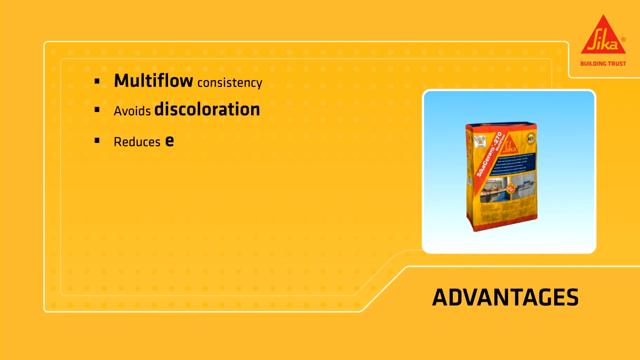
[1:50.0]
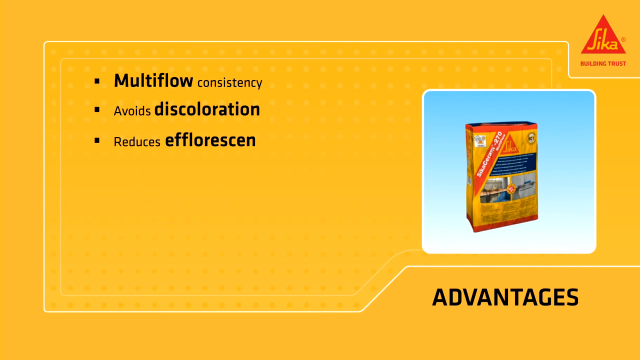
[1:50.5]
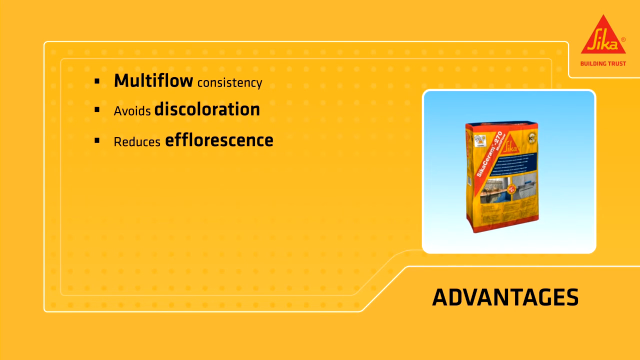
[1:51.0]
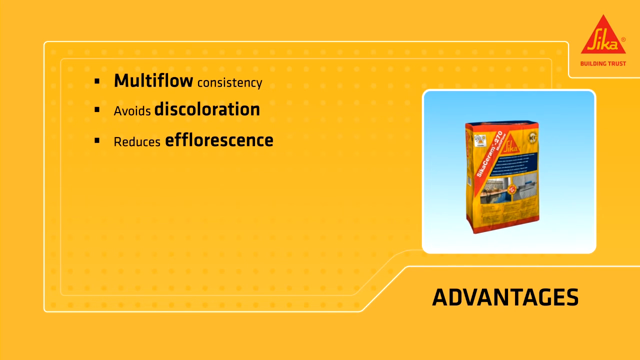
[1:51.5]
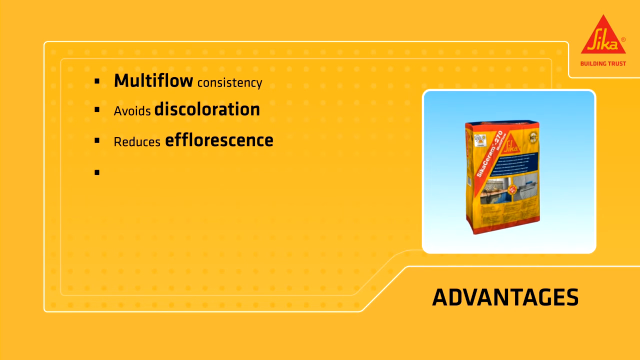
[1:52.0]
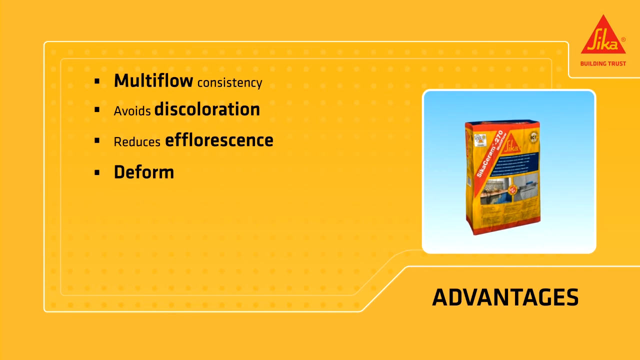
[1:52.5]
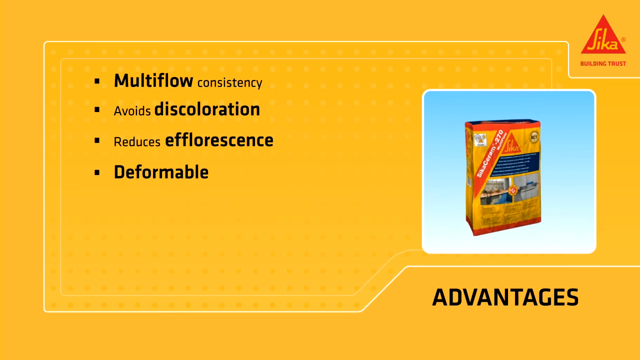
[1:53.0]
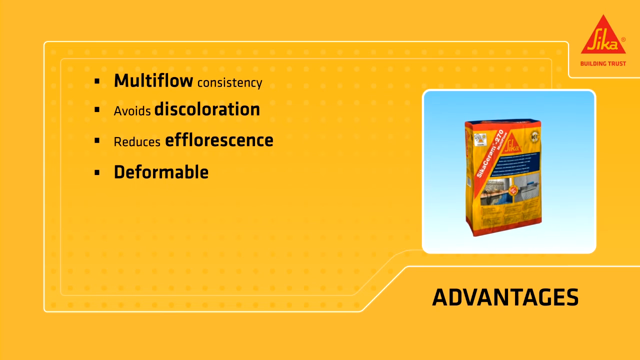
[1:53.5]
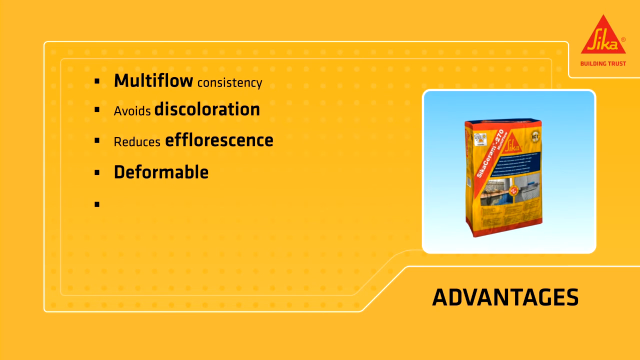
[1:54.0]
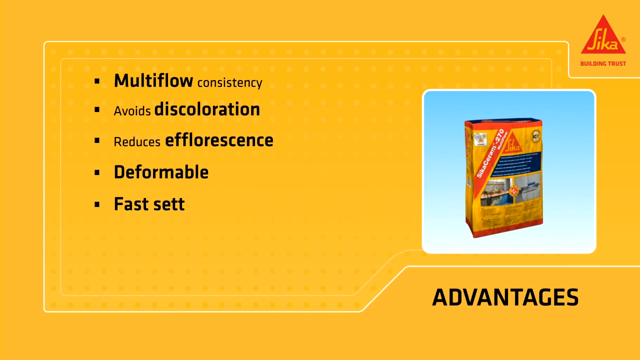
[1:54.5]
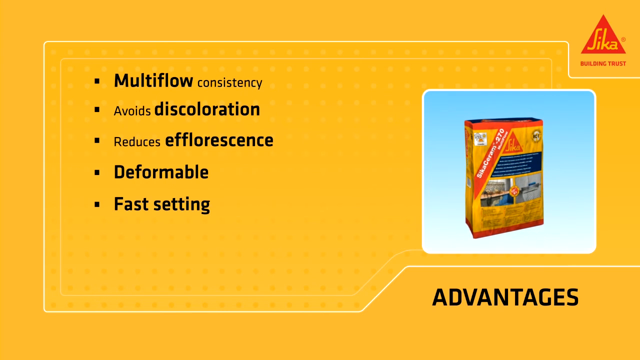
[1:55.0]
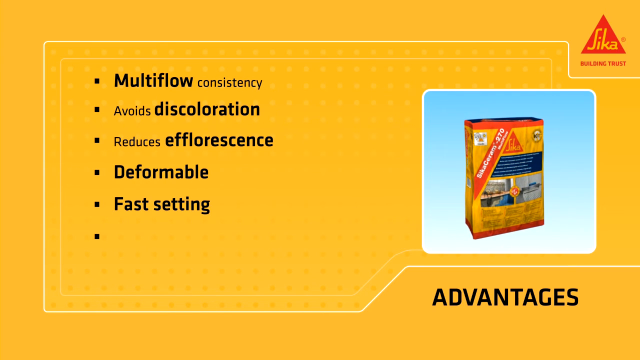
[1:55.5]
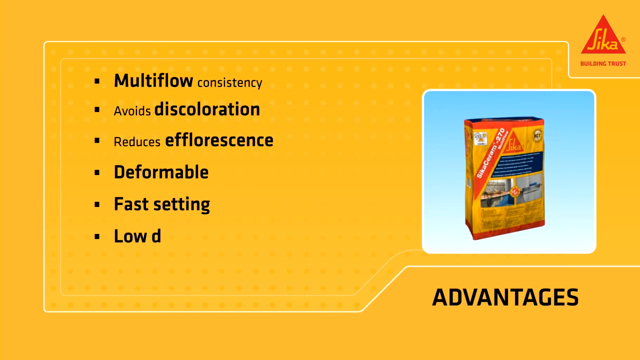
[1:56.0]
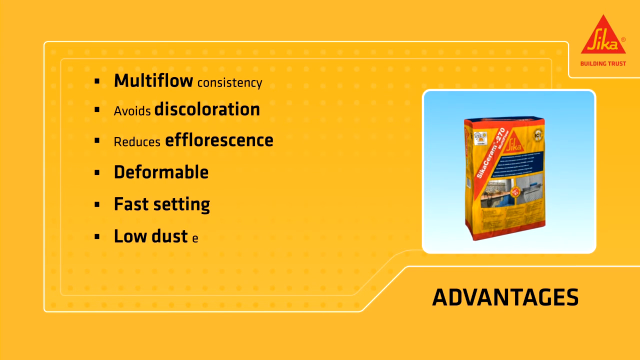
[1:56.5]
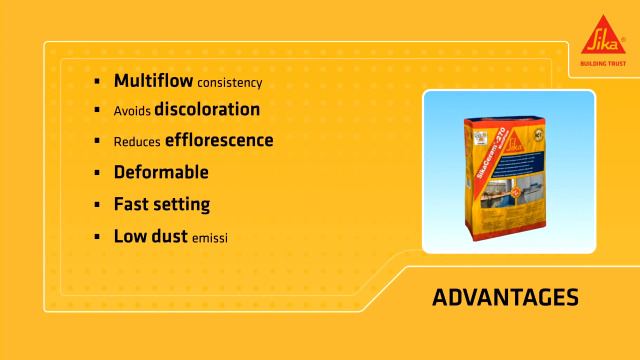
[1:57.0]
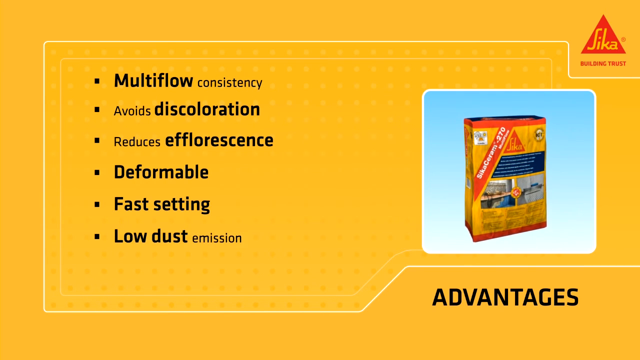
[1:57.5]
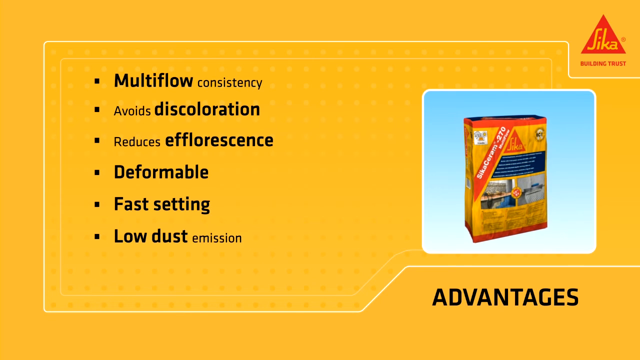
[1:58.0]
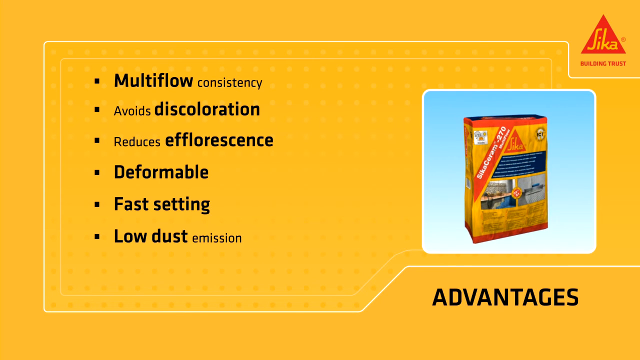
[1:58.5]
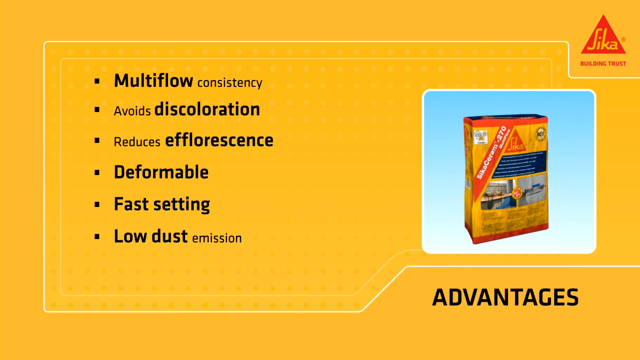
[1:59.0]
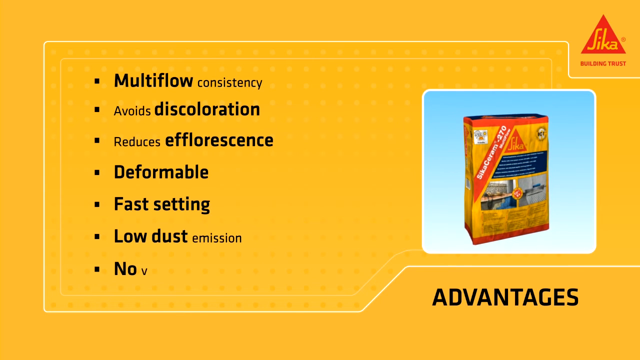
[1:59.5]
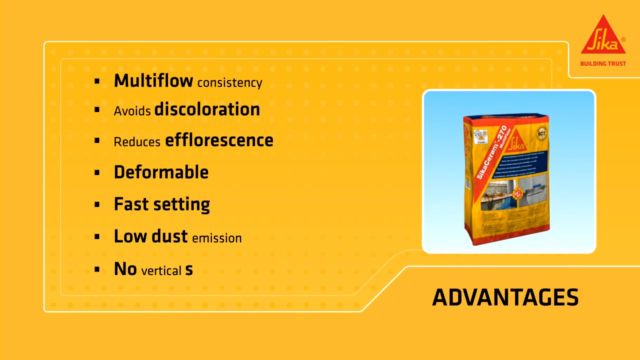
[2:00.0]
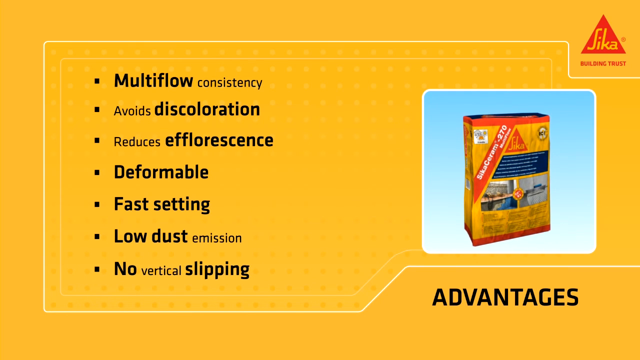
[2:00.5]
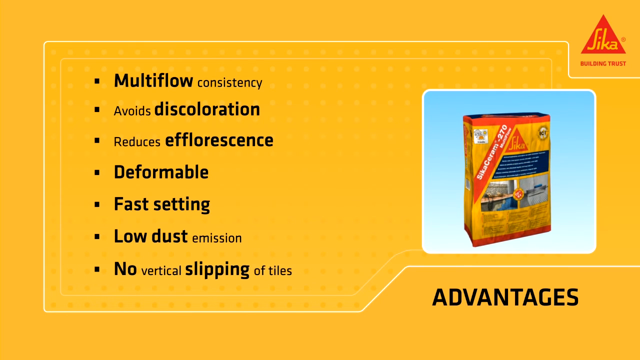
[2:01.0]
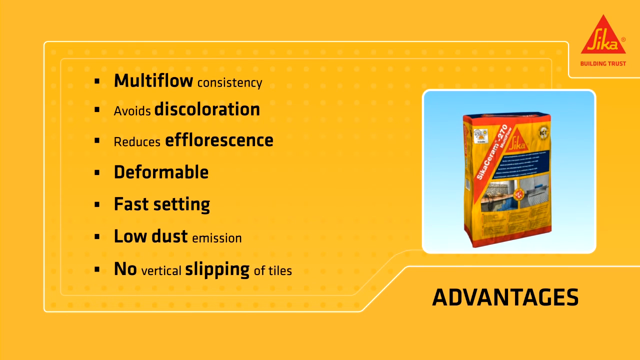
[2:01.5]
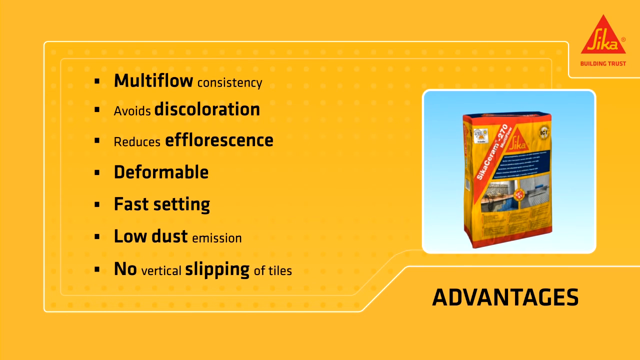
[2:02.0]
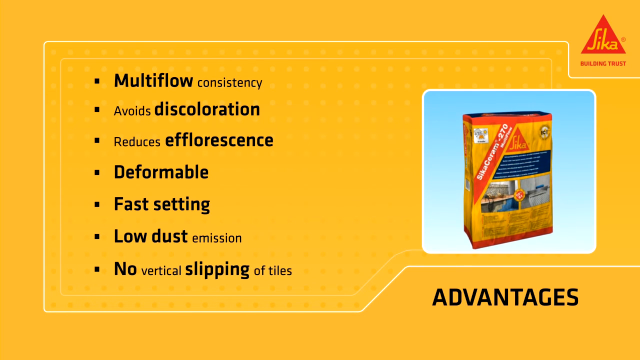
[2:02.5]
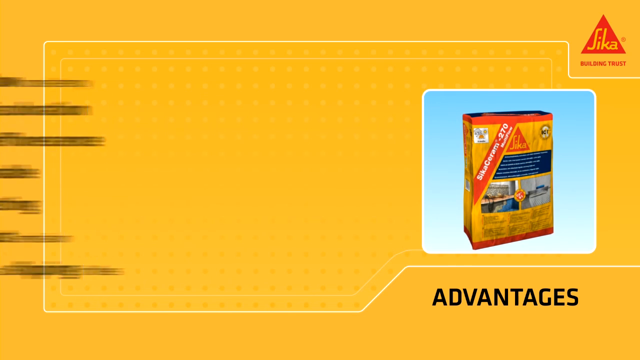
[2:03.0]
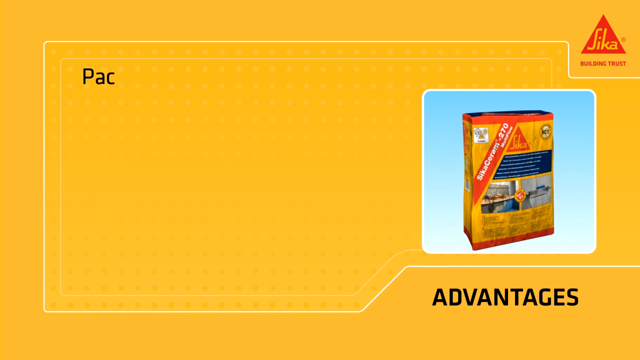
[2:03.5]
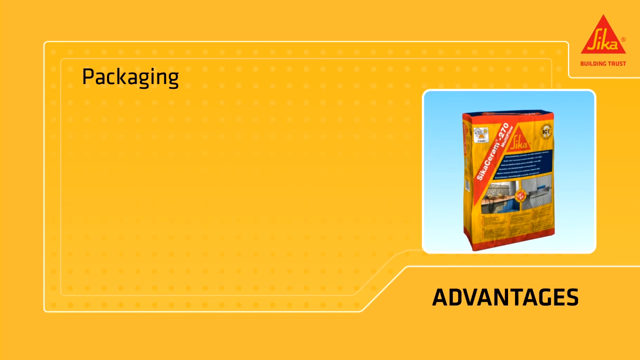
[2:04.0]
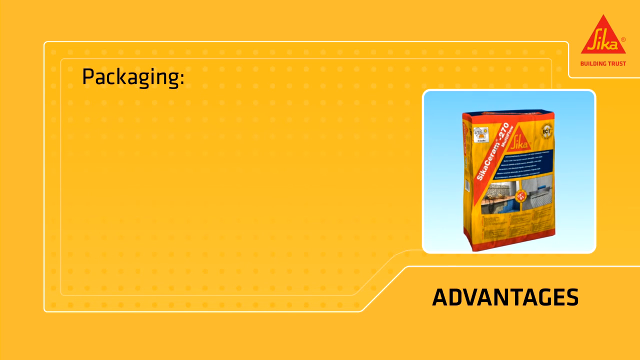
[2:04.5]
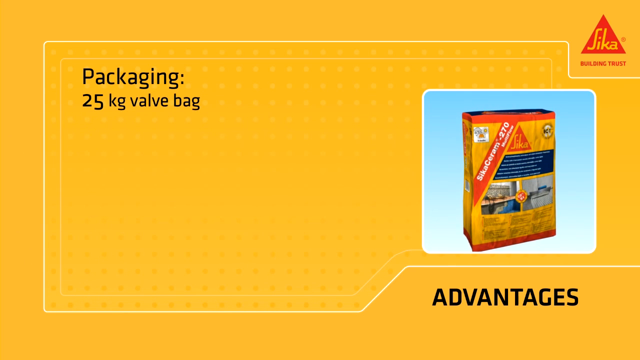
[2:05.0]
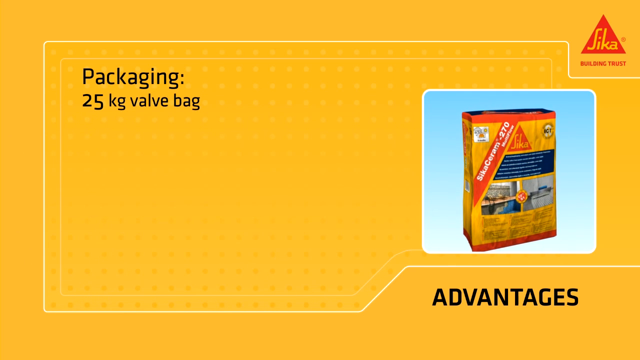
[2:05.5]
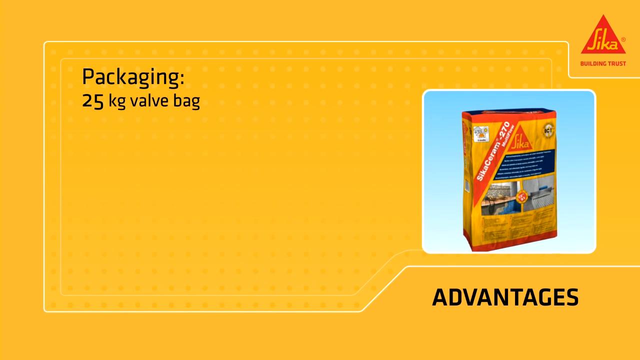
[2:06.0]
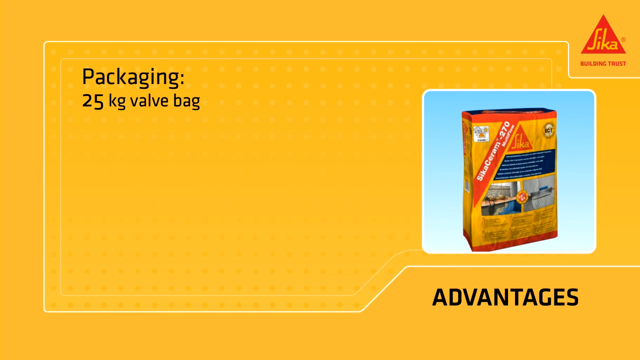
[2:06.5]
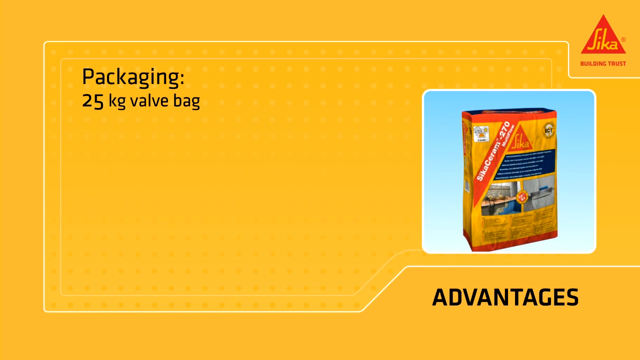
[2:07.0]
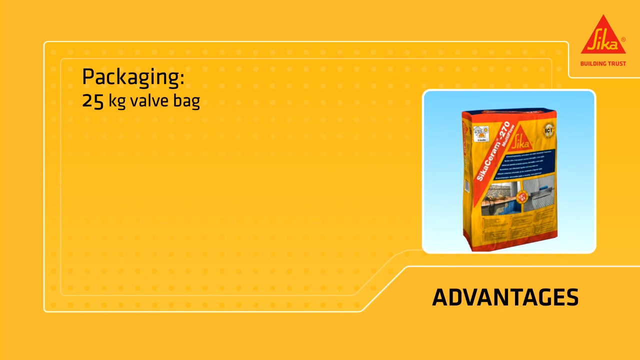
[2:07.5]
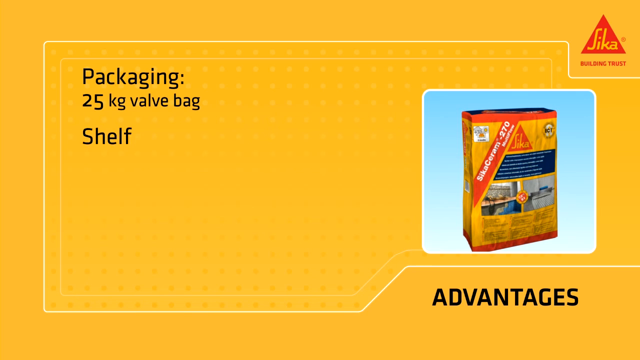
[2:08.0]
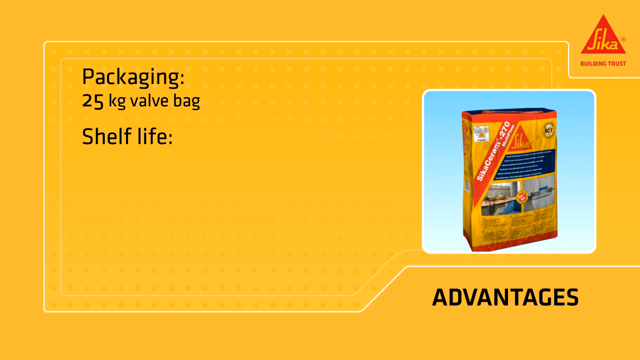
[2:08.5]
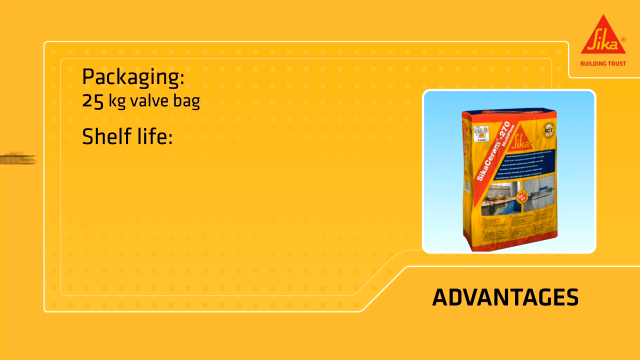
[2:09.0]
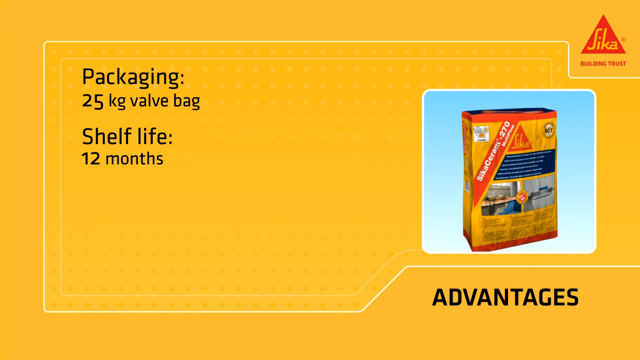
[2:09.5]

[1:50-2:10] A yellow background holds text and images about the product and process. On the right is a yellow, red and black bag of the powder; on the left is a bulleted list of advantages: "multi-flow consistency," "avoids discoloration," "reduces efflorescence," "deformable," "fast setting," "low dust emission," and "no vertical slipping of the tiles." The list slides out of the way and, still in the advantages section, "packaging" appears, with "25 kilogram bag" under it and "shelf life, 12 months" below that.